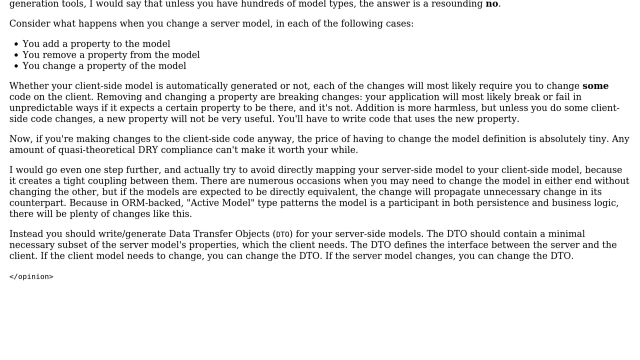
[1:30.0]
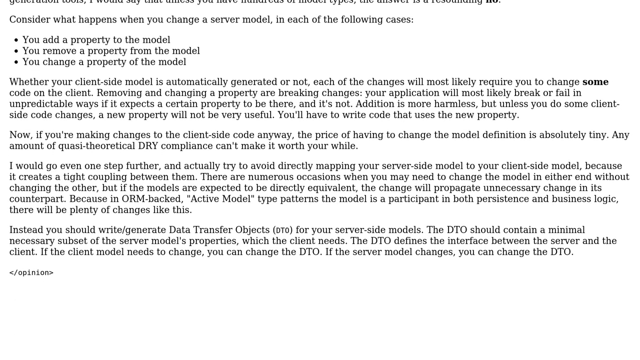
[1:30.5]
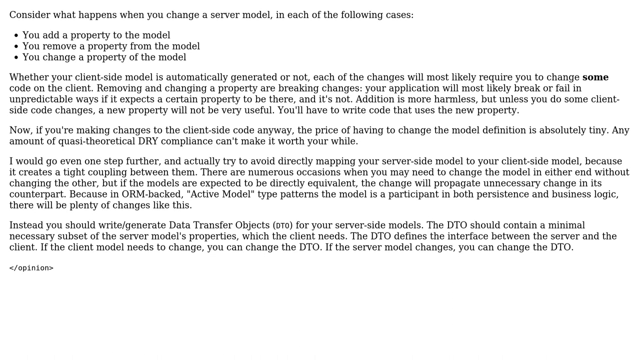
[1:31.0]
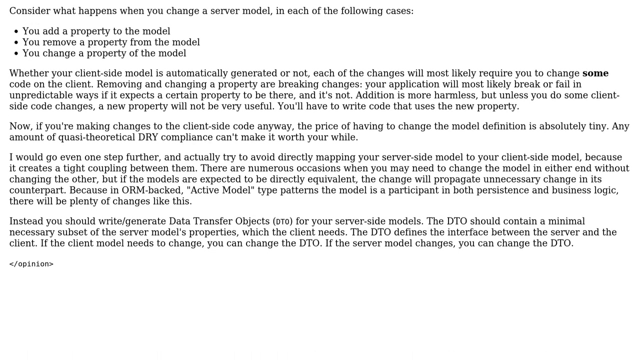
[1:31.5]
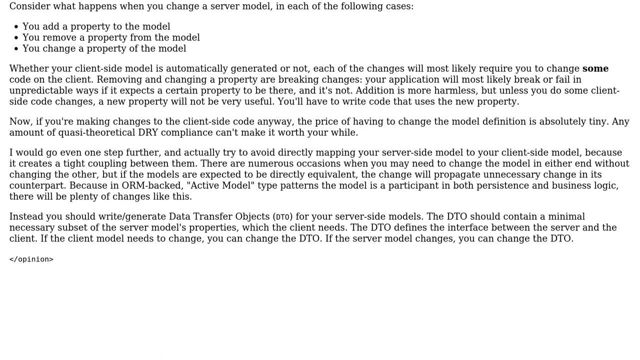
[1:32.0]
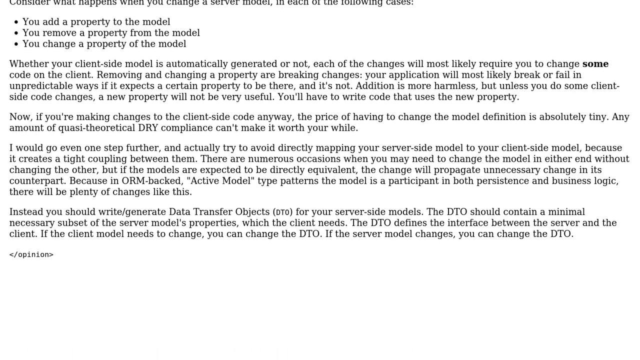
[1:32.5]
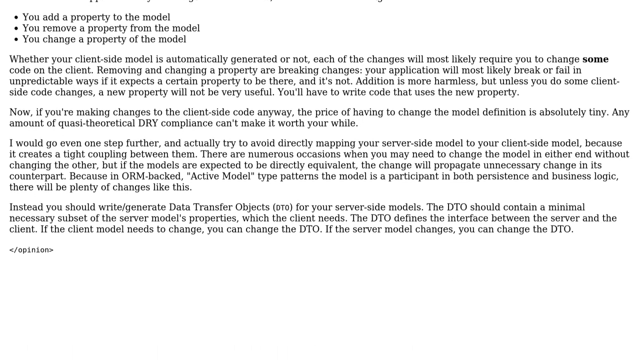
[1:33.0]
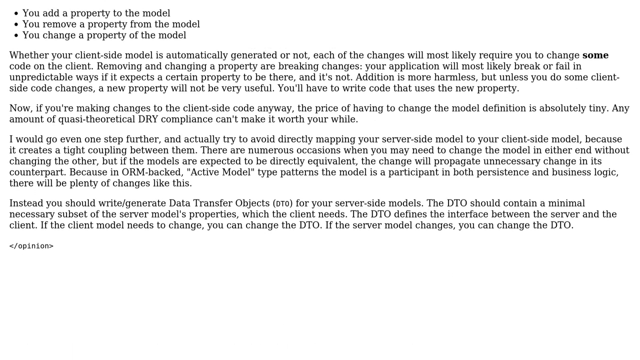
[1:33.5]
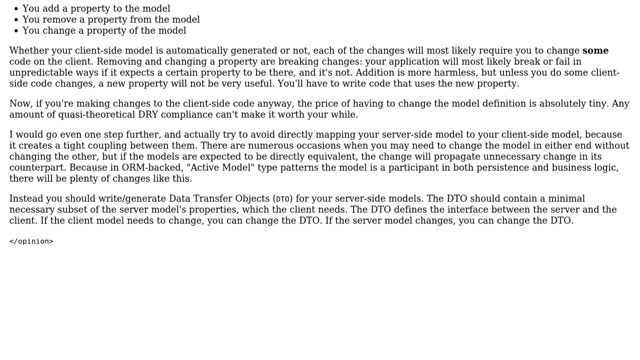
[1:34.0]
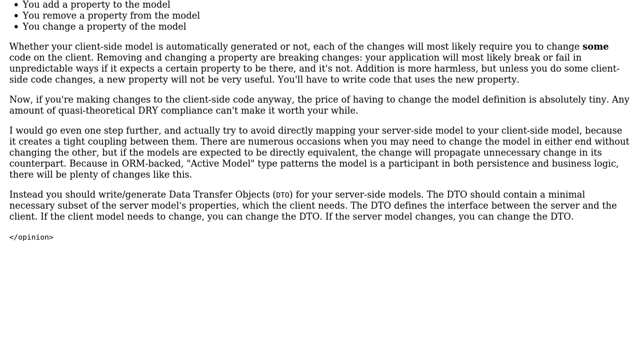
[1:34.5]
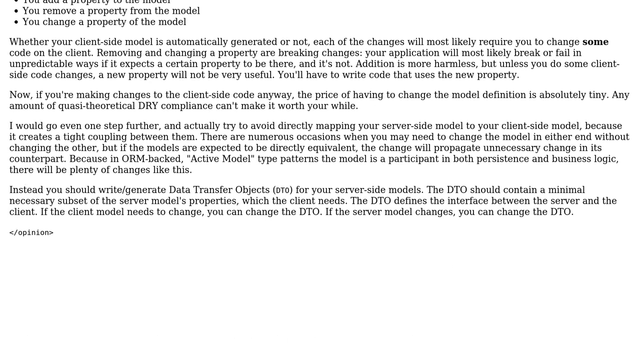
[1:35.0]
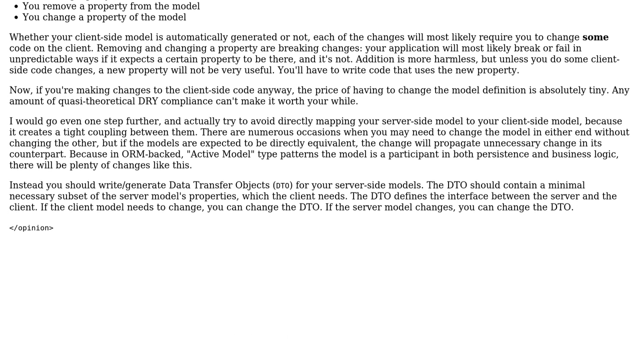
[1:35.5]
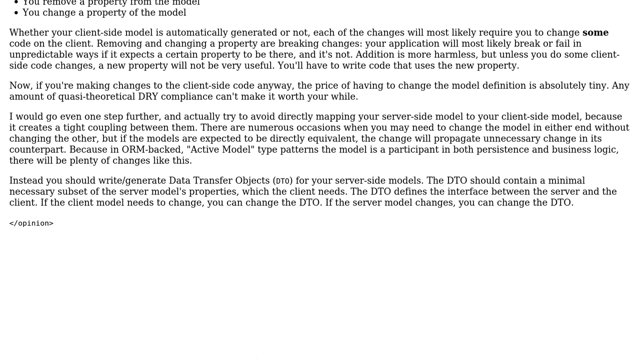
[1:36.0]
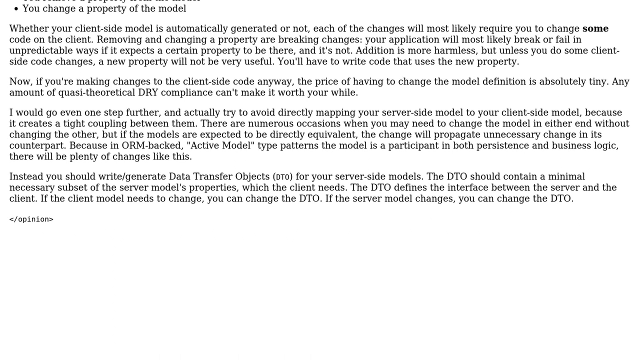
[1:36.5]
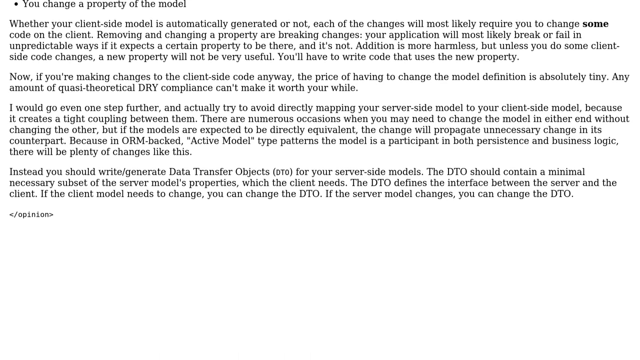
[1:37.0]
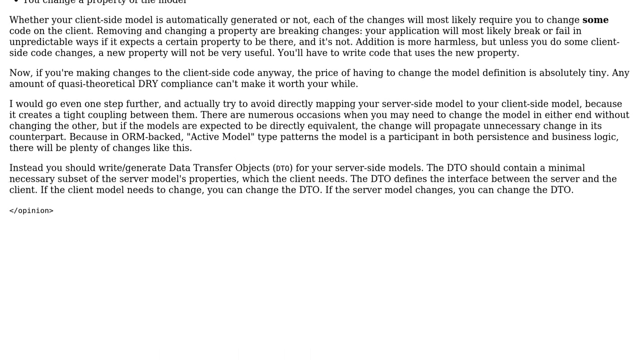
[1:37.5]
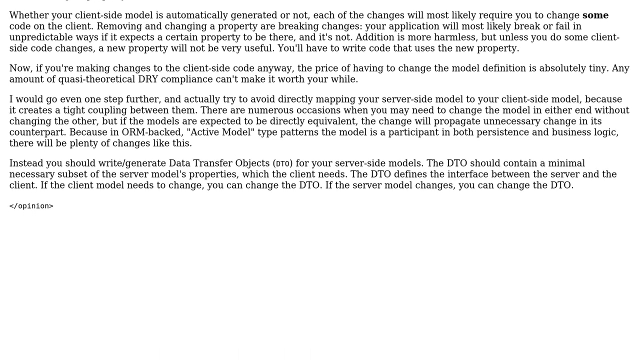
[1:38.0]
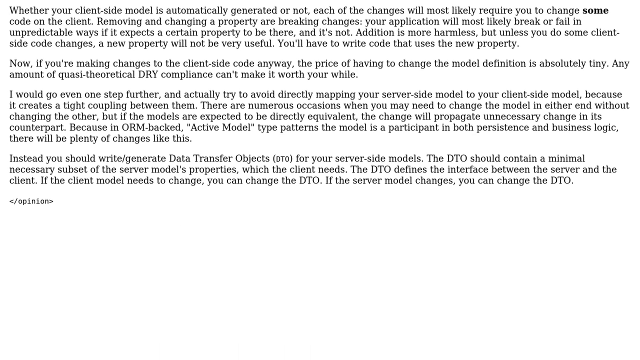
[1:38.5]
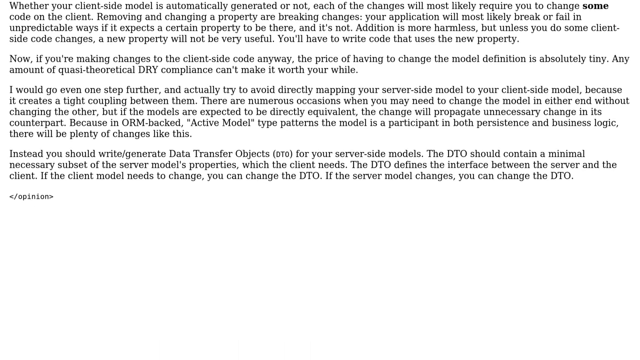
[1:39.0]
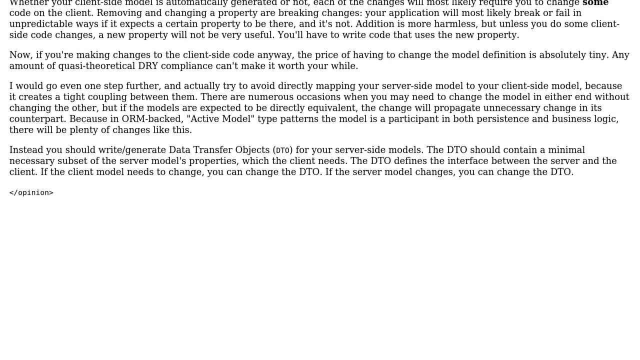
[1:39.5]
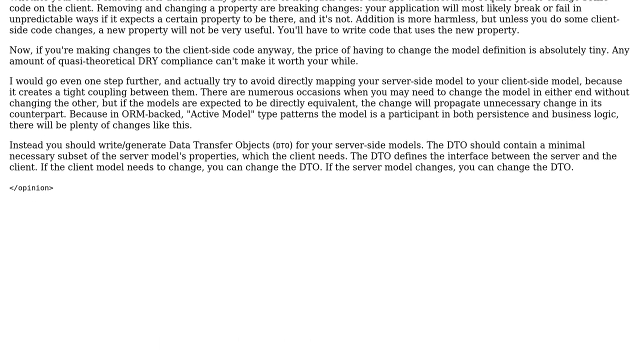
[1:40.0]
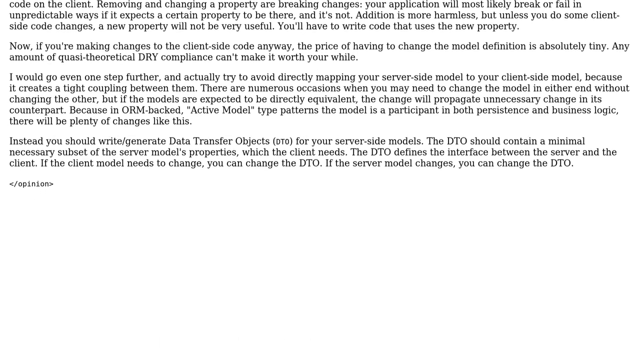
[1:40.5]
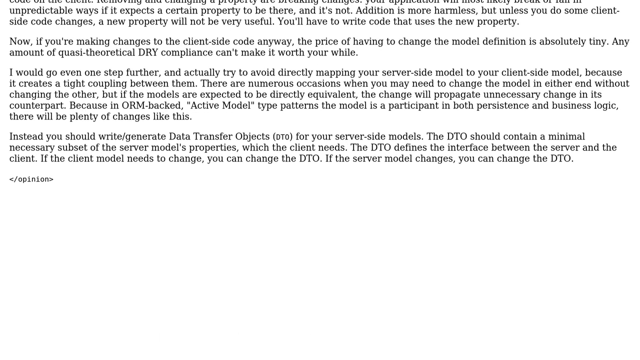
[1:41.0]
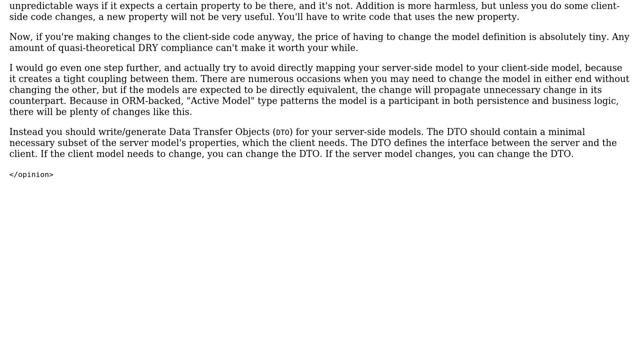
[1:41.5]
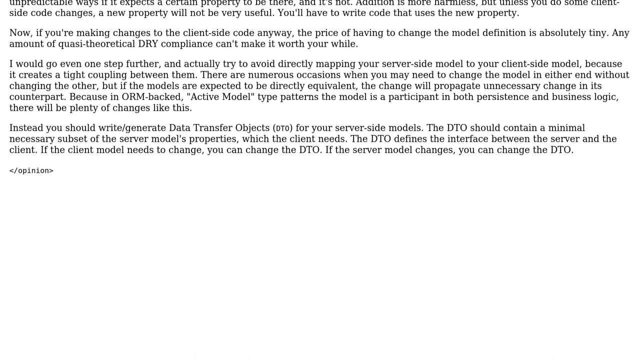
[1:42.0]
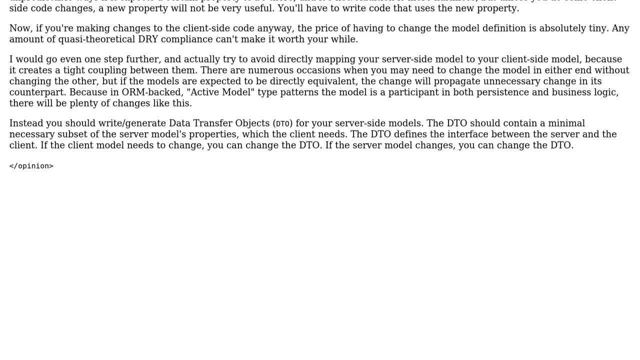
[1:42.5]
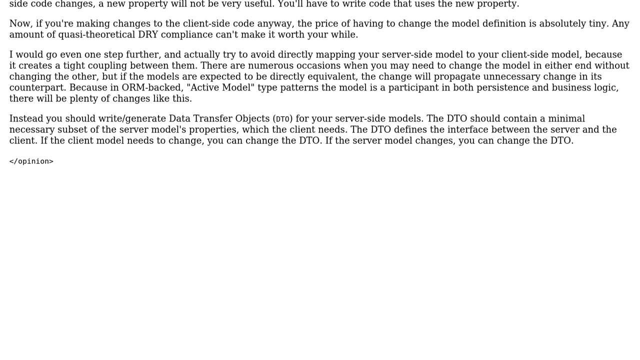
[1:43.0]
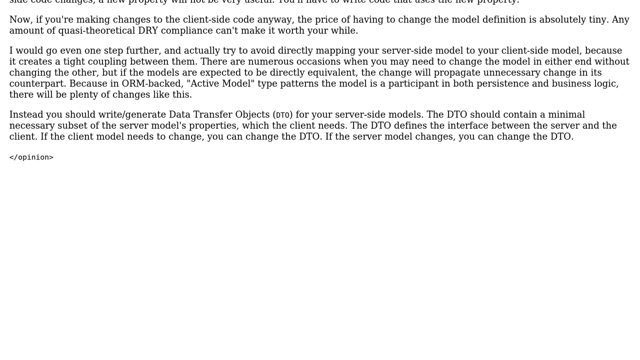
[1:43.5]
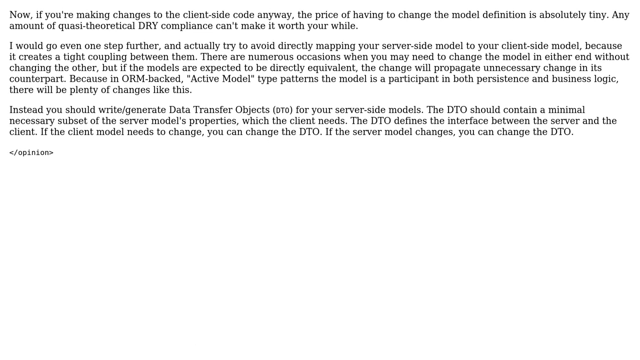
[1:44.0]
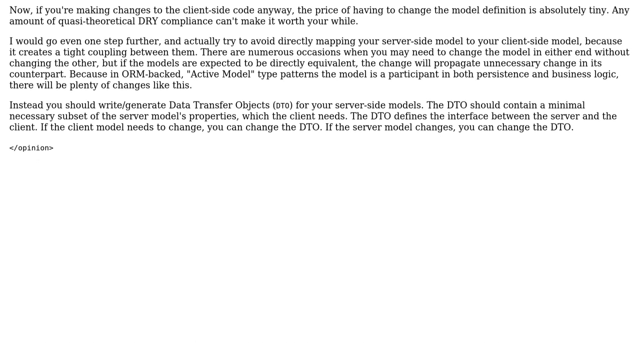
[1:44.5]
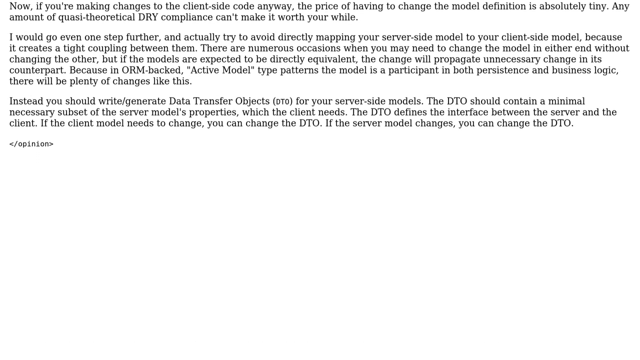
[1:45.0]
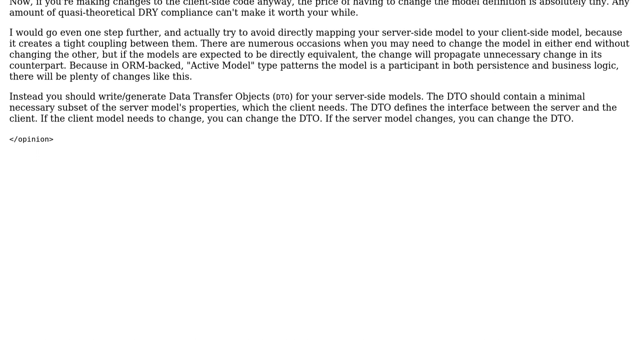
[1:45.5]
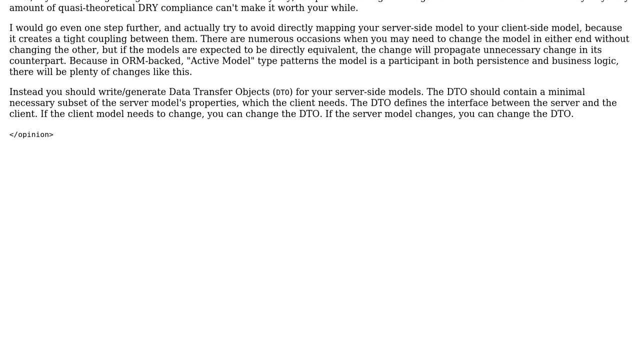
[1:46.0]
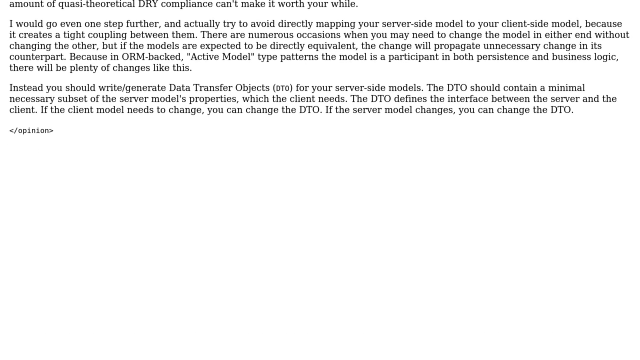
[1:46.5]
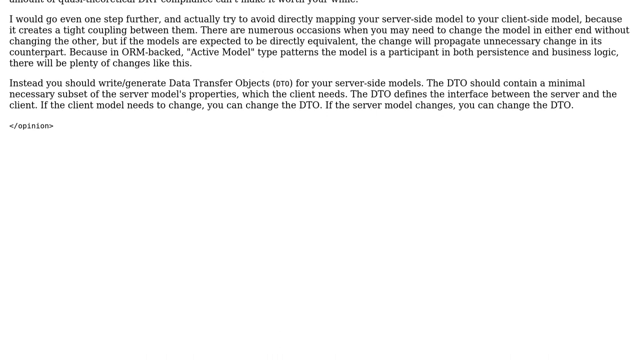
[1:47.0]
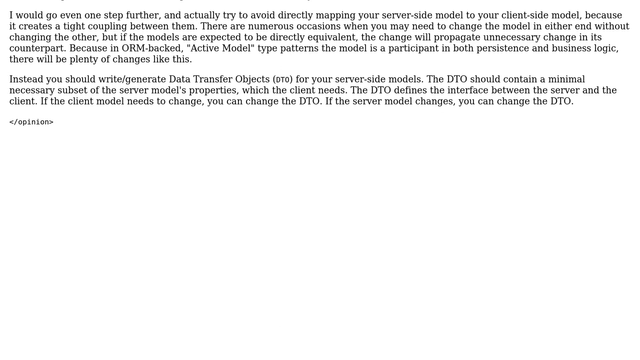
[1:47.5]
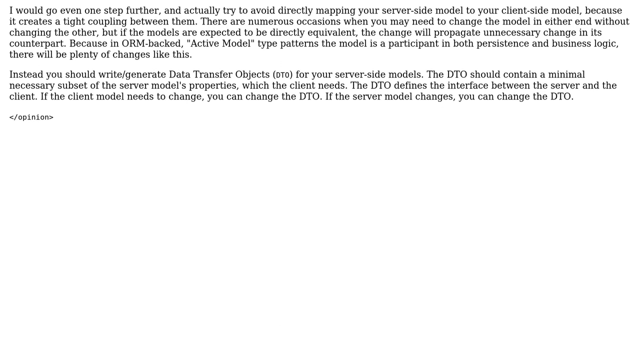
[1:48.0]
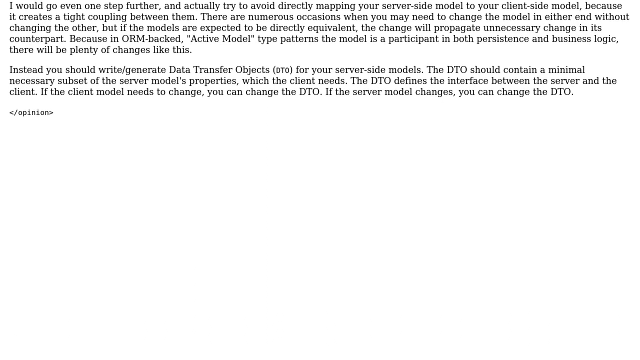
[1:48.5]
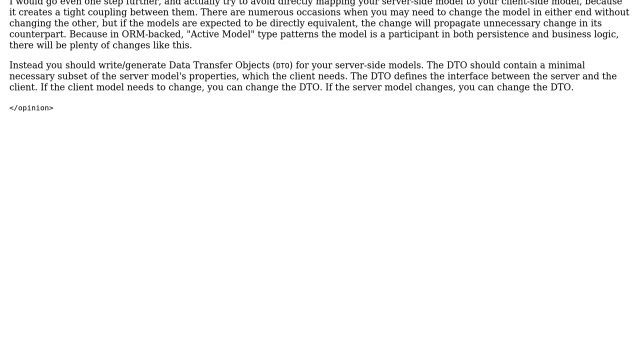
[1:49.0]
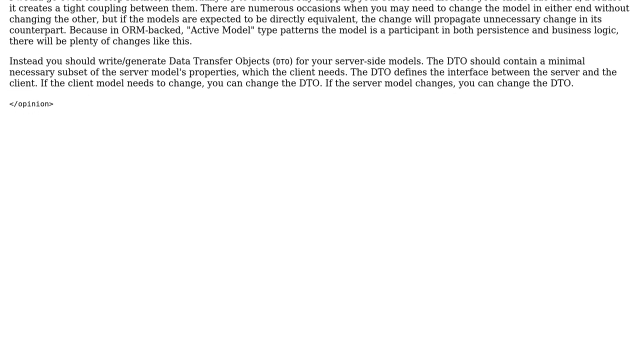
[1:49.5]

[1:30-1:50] The scrolling continues downward, and the black text keeps slowly rising on the all-white background. It is a large piece of text with multiple sentences and paragraphs, very wide, stretching all the way from the left side to the right side. At the very end of the text, at the bottom, is the word "opinion". The text keeps moving upward as the page apparently scrolls slowly through it.